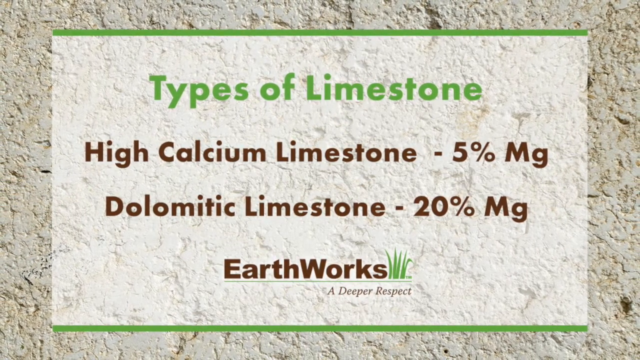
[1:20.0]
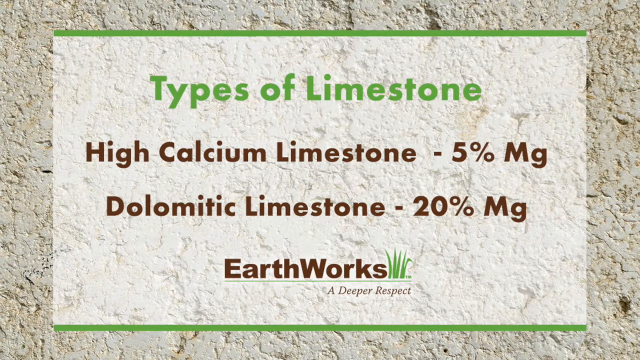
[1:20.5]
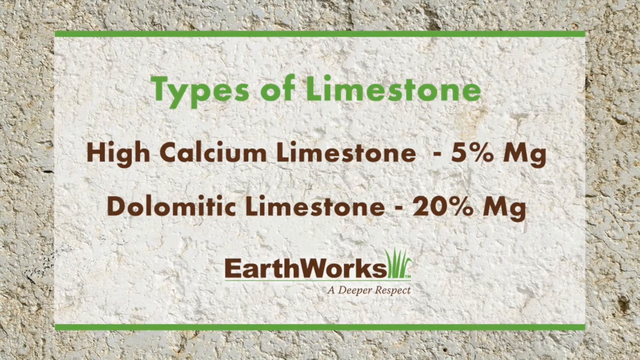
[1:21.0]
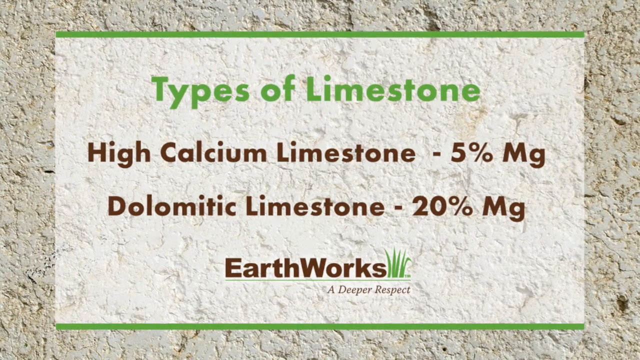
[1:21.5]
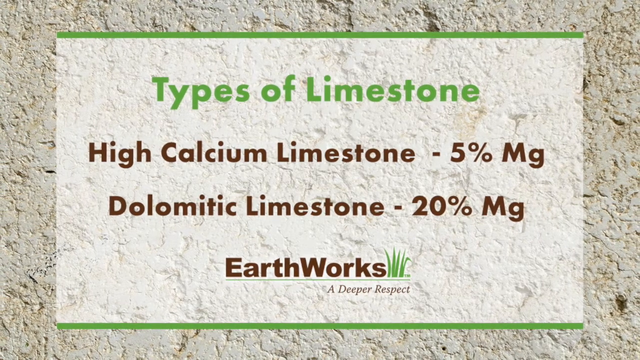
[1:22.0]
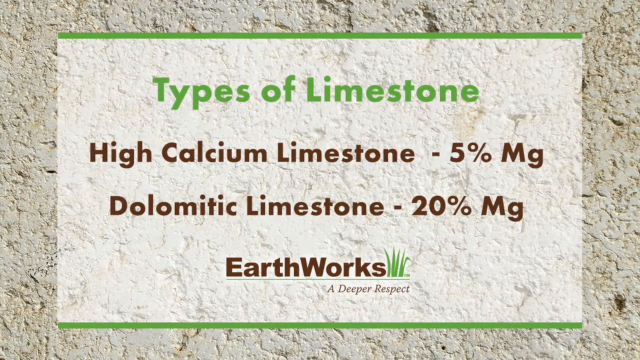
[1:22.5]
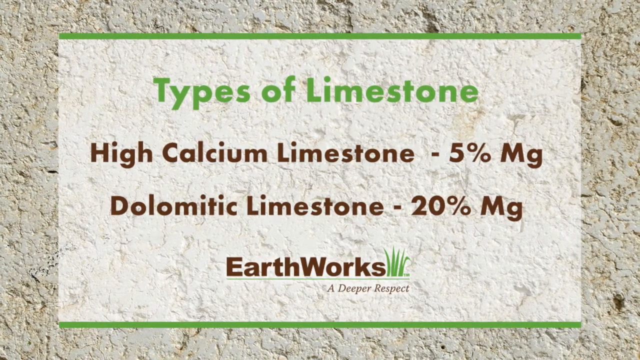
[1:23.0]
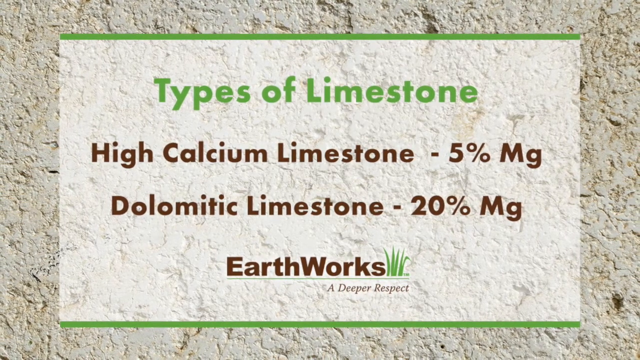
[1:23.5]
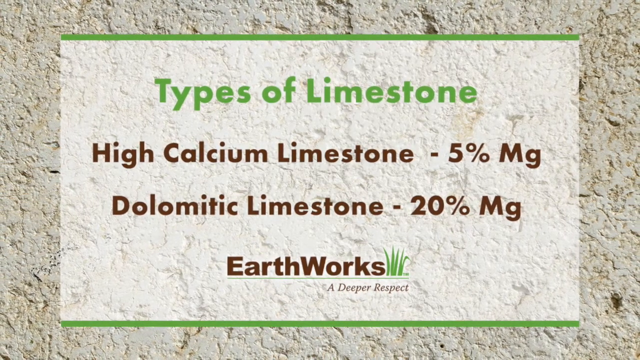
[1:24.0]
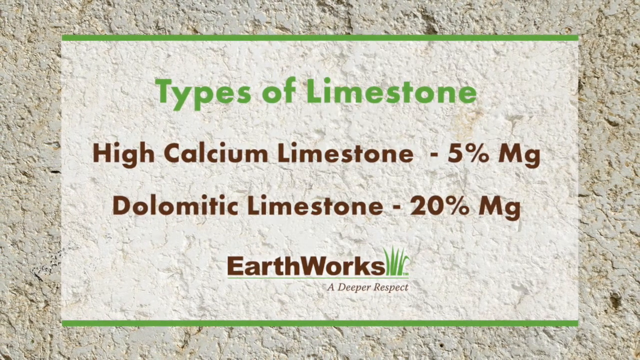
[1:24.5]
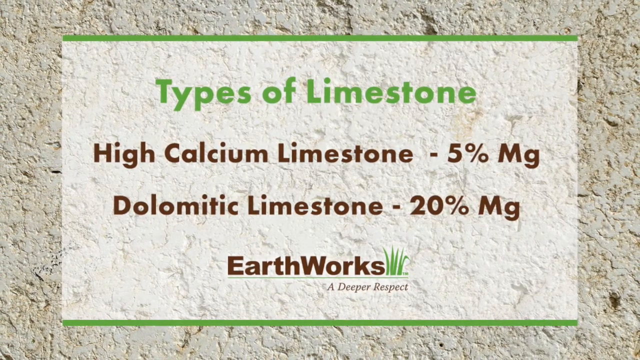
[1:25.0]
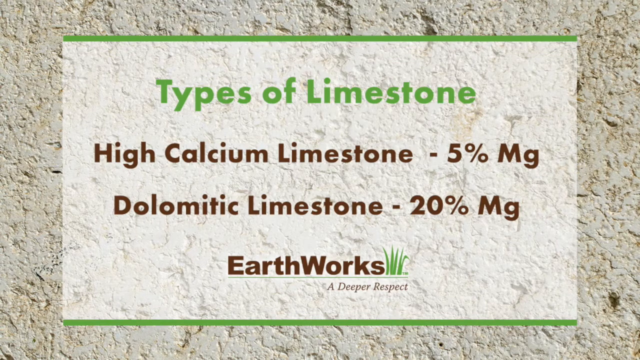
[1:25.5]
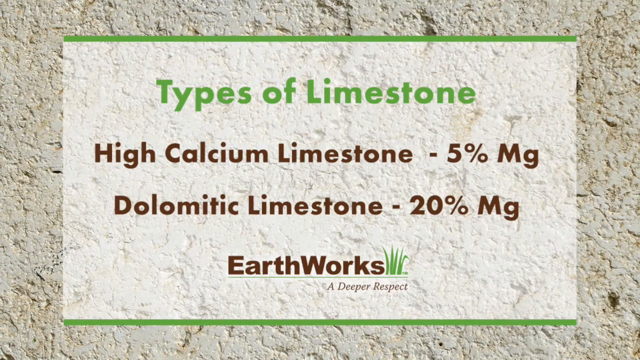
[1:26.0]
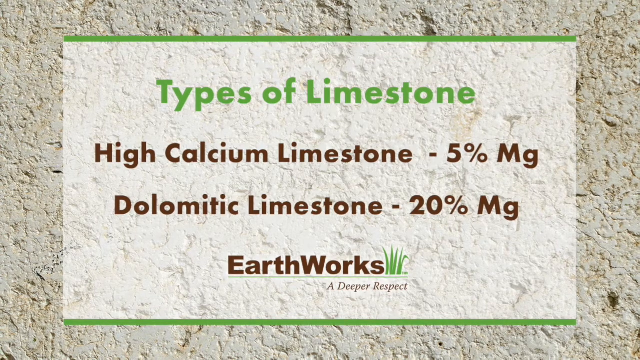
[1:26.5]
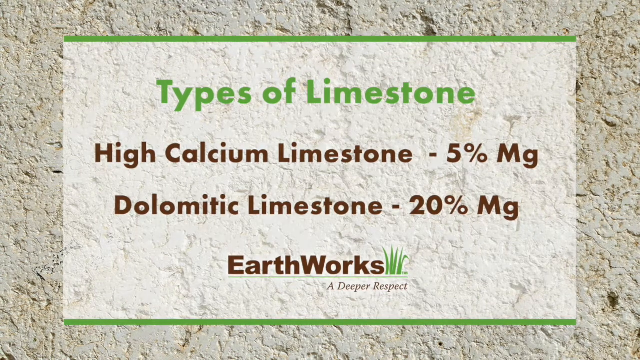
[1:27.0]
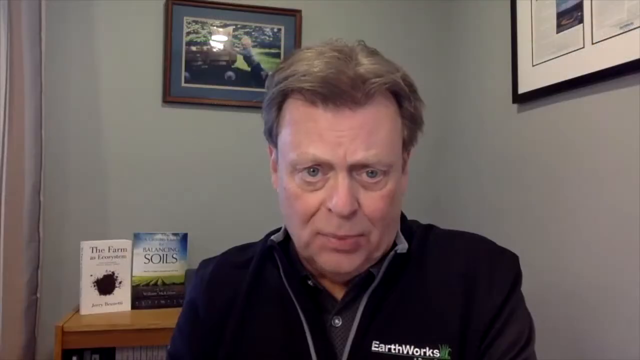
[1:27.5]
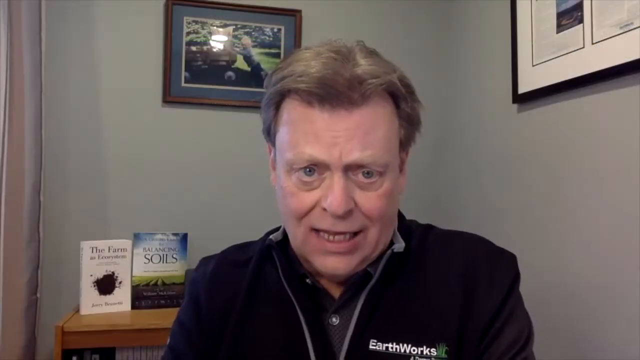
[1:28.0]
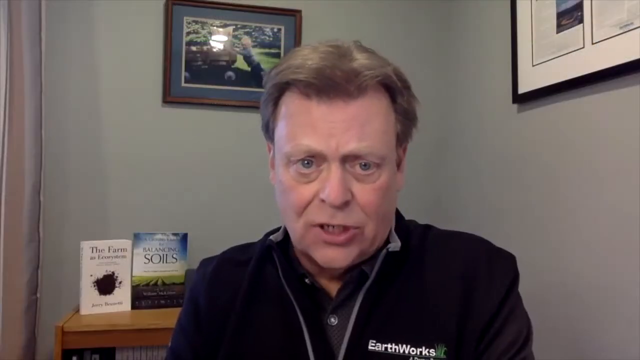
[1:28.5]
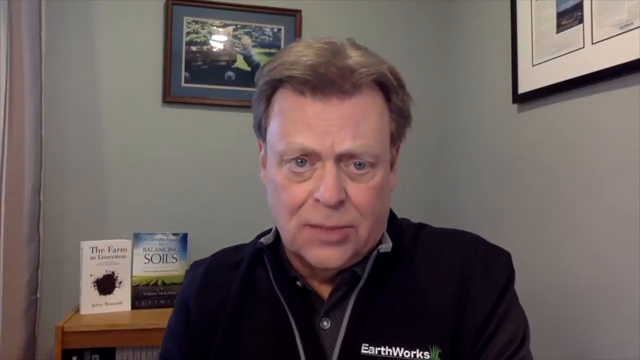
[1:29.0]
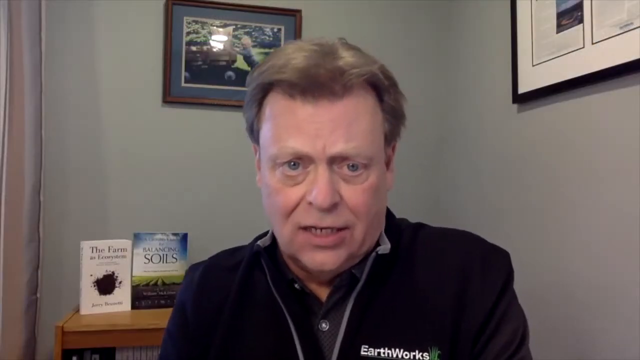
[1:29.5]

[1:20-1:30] A slide reads "Types of limestone. High Calcium limestone, 5% MG. Dolomitic limestone, 20% MG. Earthworks, a deeper respect." After the slide, the video goes back to Joel Simmons in his office. Directly behind him are a couple of paintings on the wall and two books, possibly his own. He looks at the camera and speaks directly to it. He wears his black shirt, which says "Earthworks," the company logo, on his left side.